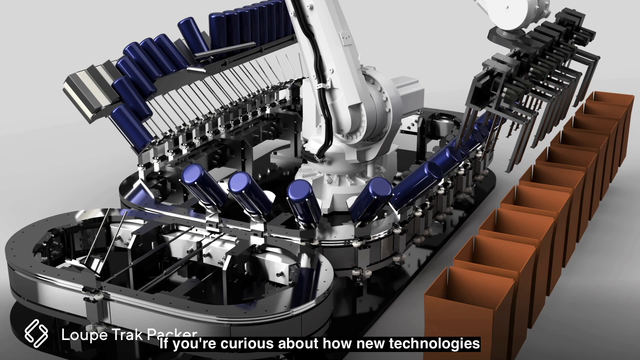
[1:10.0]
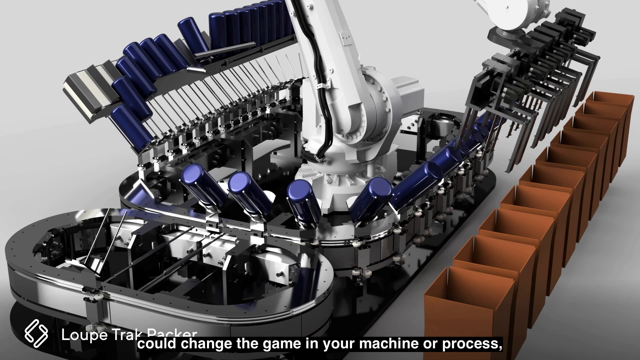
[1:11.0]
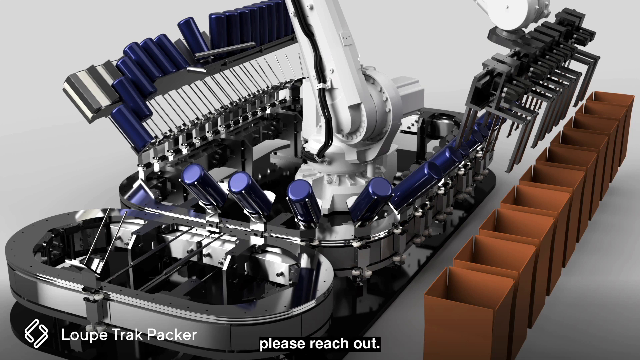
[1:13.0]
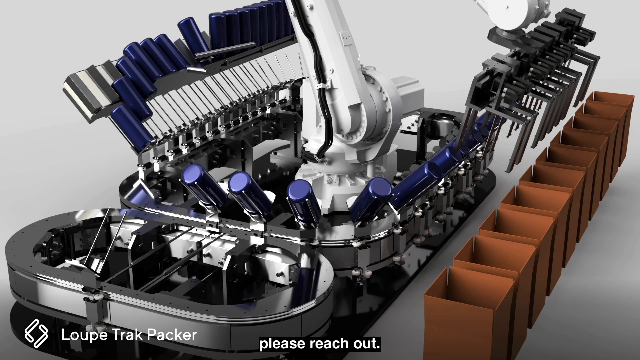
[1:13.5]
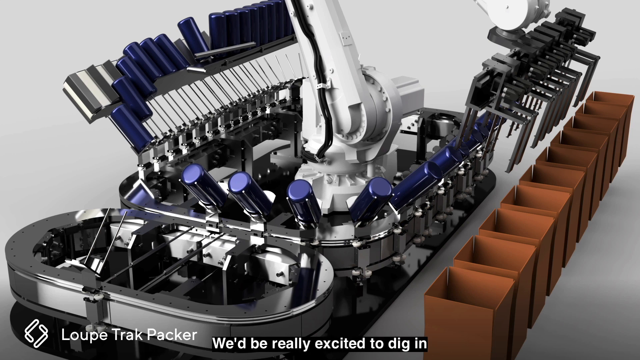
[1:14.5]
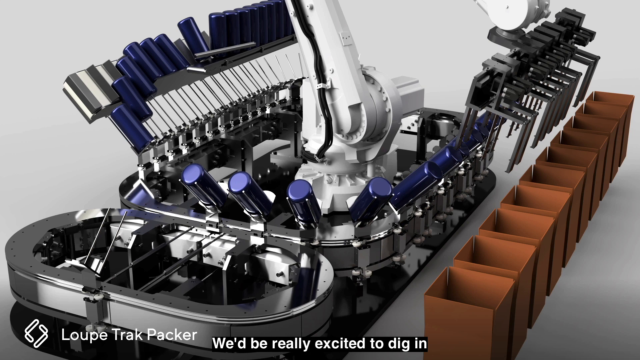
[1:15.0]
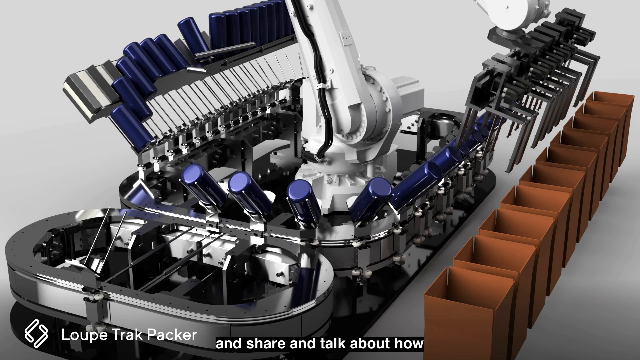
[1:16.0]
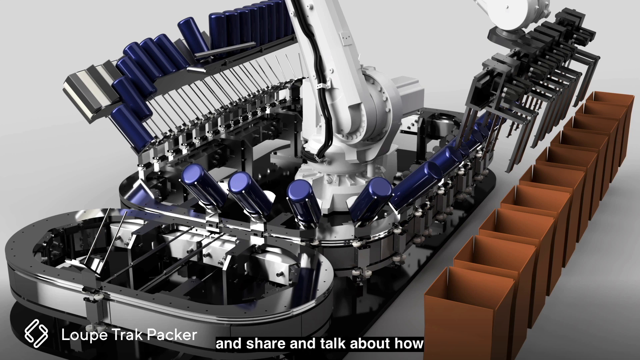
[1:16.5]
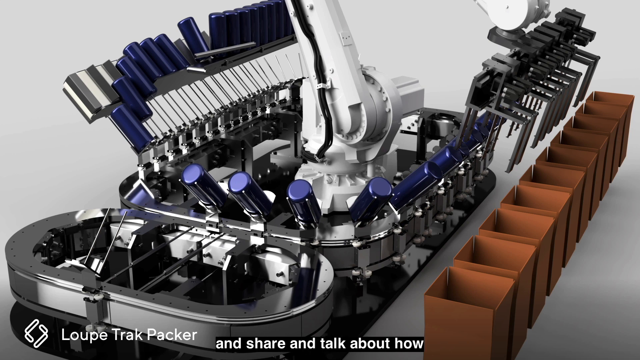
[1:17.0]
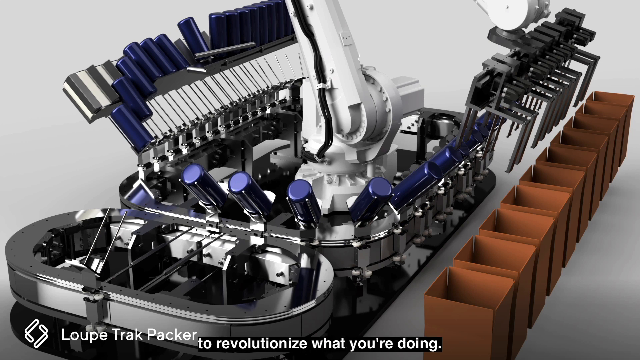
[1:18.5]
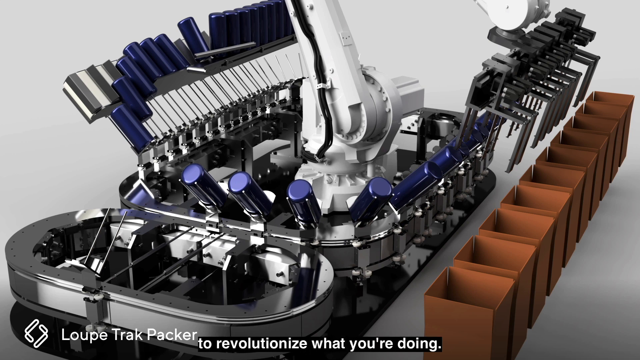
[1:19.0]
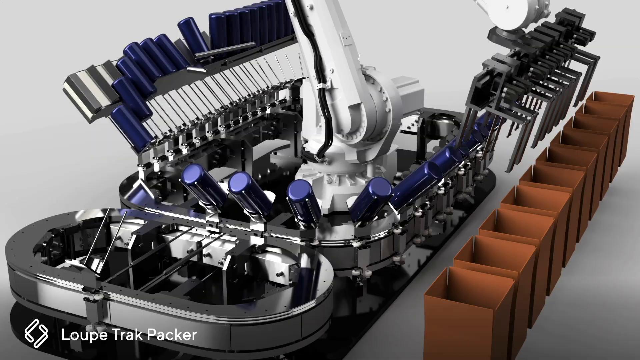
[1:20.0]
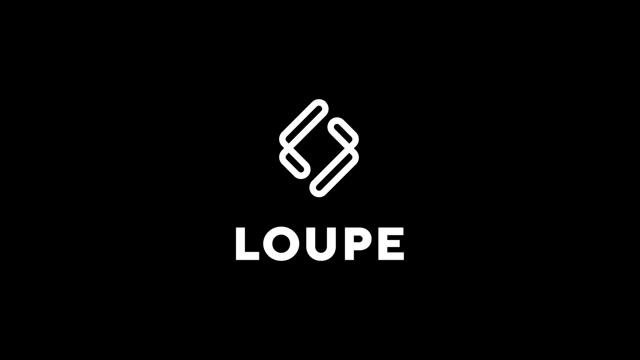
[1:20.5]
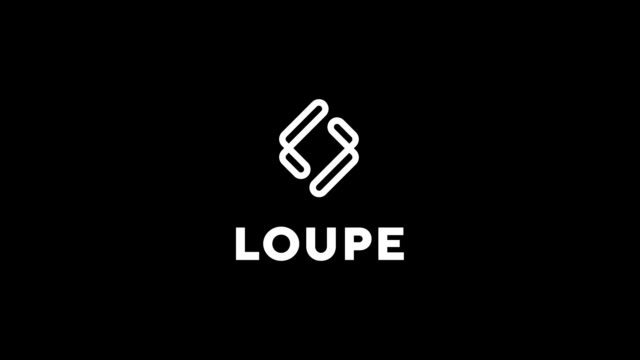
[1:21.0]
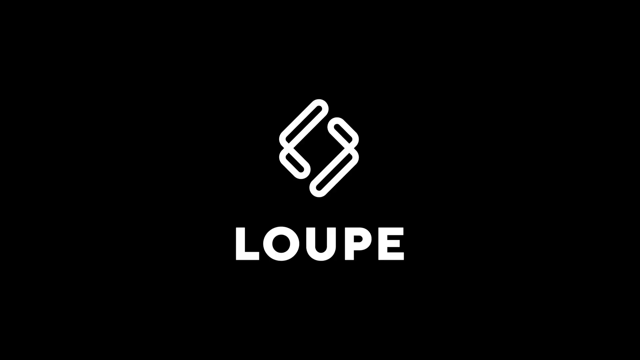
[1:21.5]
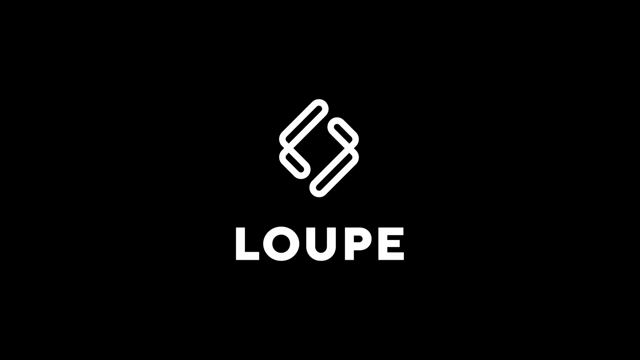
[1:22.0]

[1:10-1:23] The Lupe Trackpacker advertisement continues, showing the company's machine, the Trackpacker, and how the packaging machine is put together, including its universal feed mechanism.